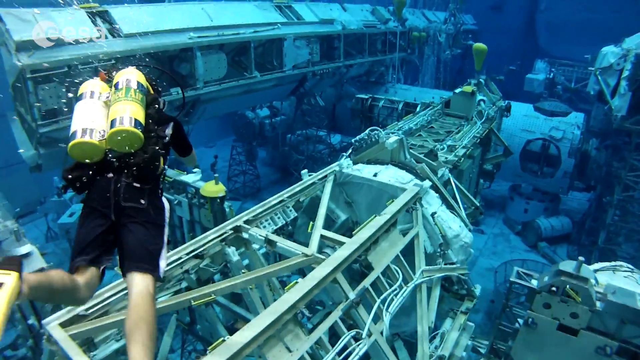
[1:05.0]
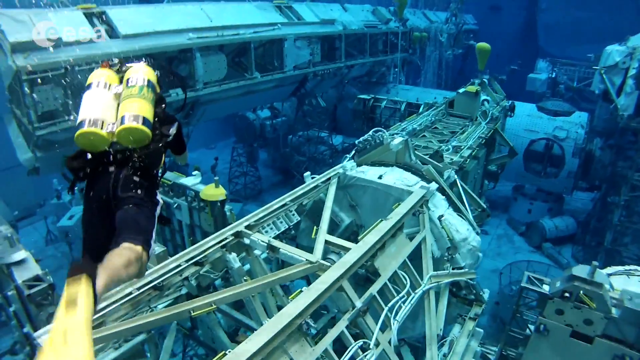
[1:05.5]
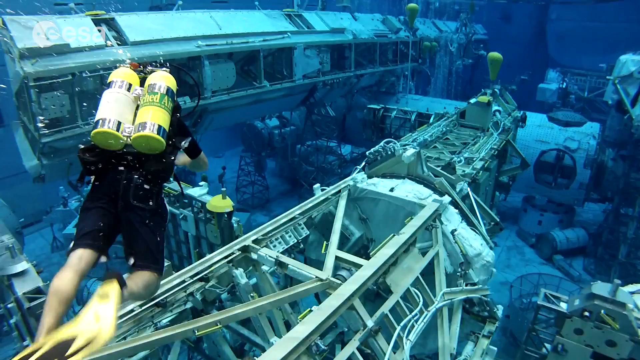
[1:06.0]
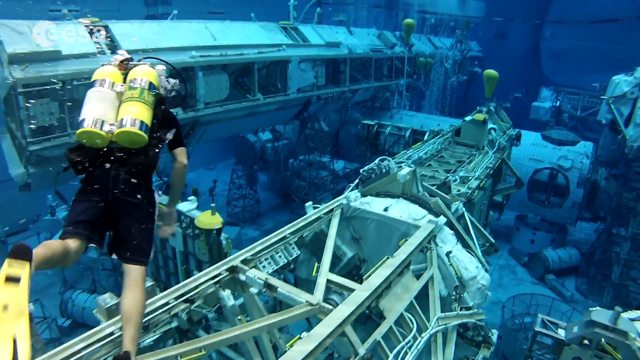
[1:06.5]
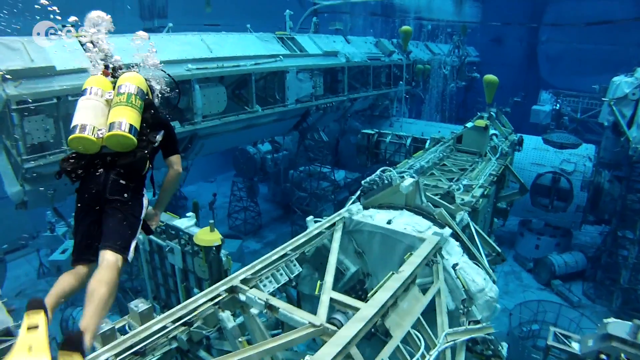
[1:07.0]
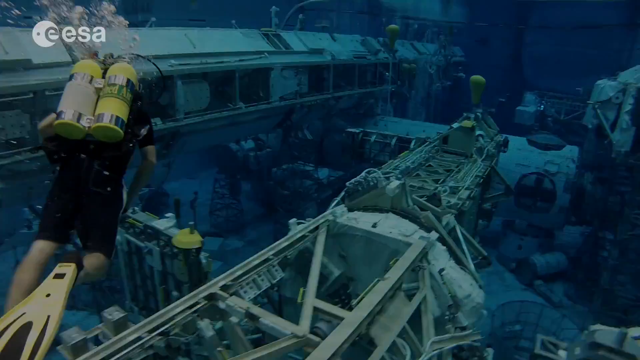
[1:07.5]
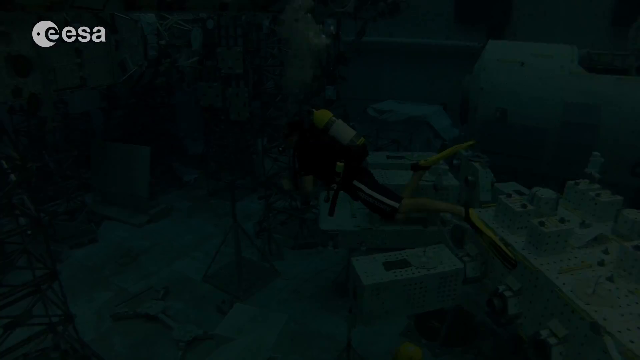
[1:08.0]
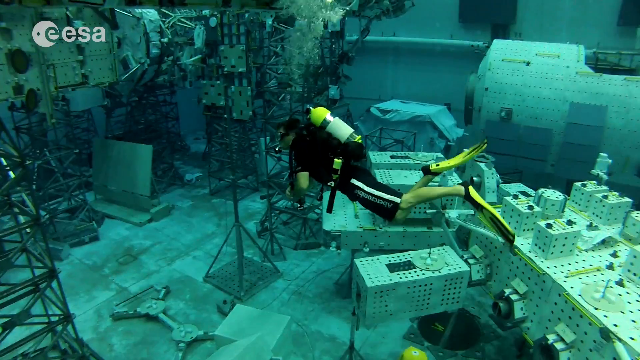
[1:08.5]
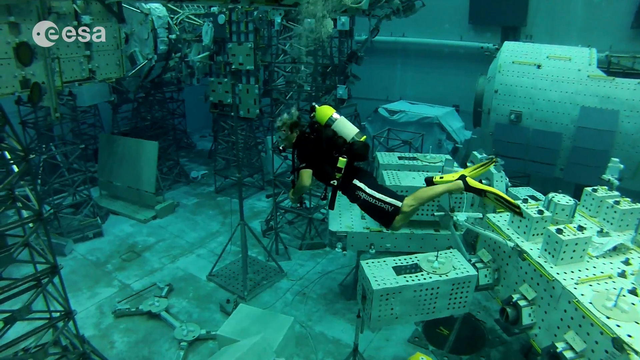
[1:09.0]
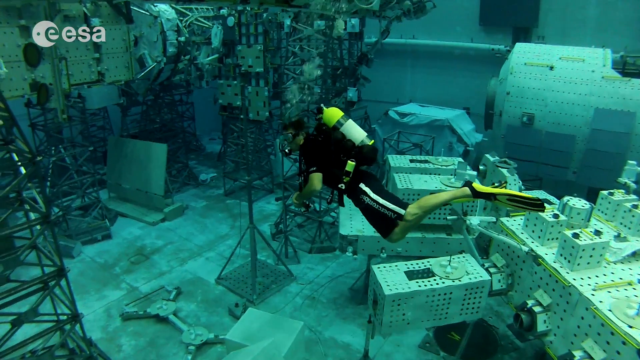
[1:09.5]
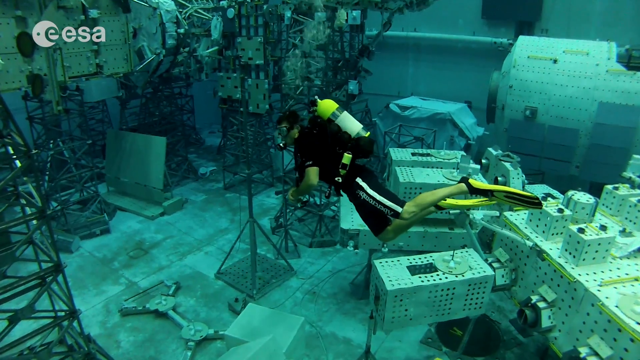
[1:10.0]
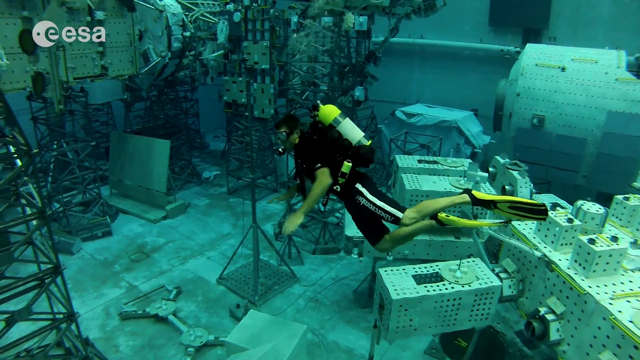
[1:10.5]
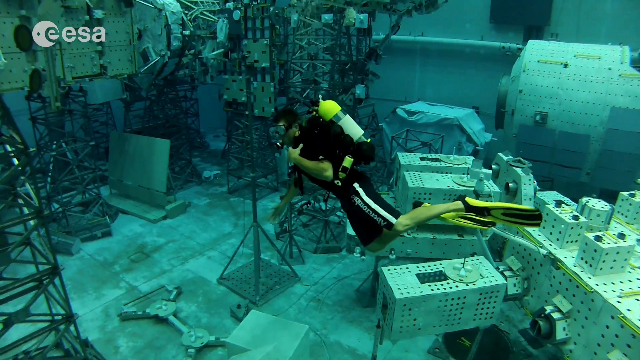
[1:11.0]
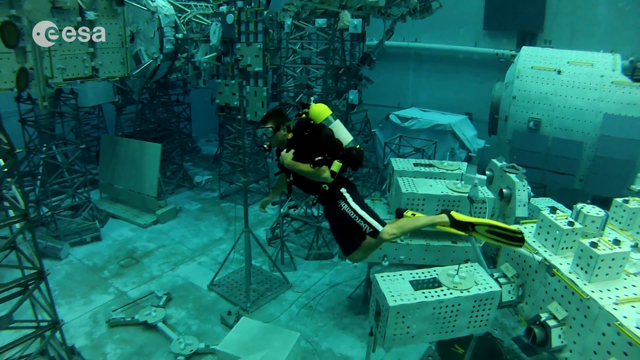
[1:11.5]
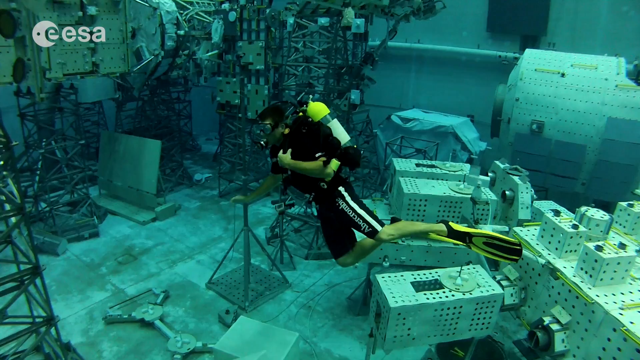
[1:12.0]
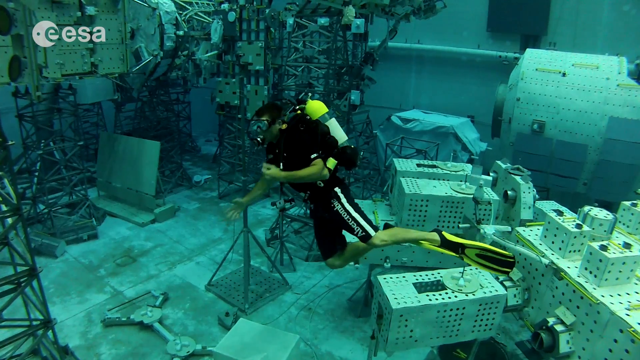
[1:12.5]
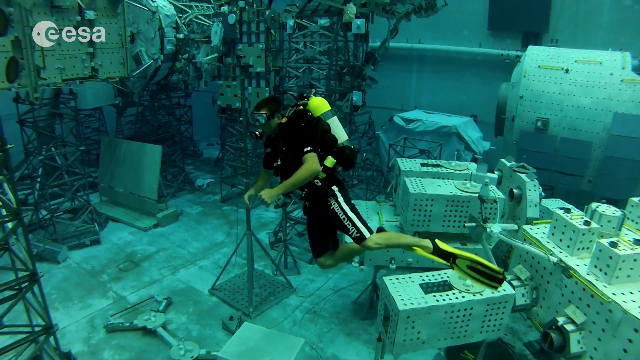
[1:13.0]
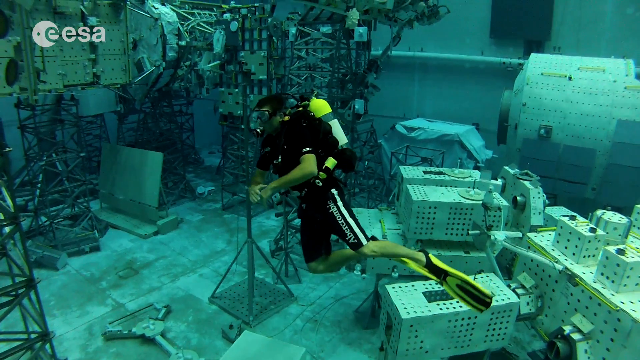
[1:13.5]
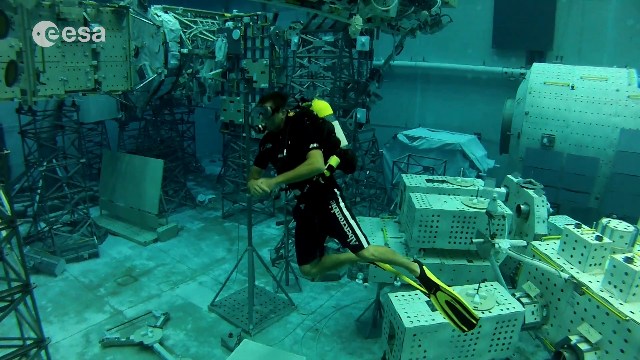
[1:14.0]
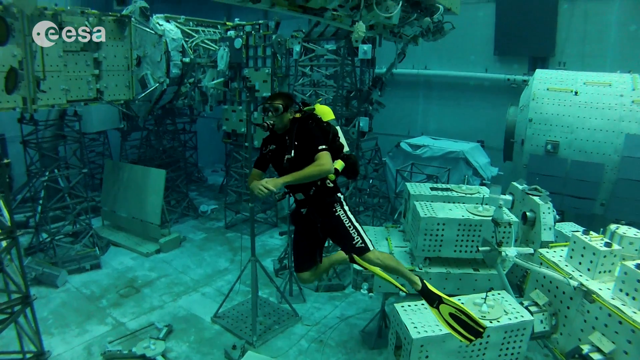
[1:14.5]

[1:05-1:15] The diver swims down to the first object, and the view changes to a different angle. There are stands and metal objects, with large cylindrical things on either side and one in the middle further down. He wears full scuba gear, yellow swimming fins and black shorts, and swims around looking. There is a lot of metal equipment, almost like the steel riser-type things used when painting a building, along with cords. The camera pans around a little, showing a couple of different angles, and shows him scuba diving in the middle, apparently swimming in place to stay in that one area. The floor looks like concrete, as do the walls. The top cannot be seen from where they are; the space is very deep, with all the equipment sunken in it.